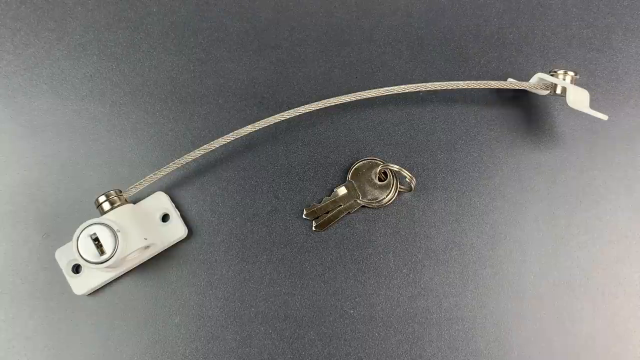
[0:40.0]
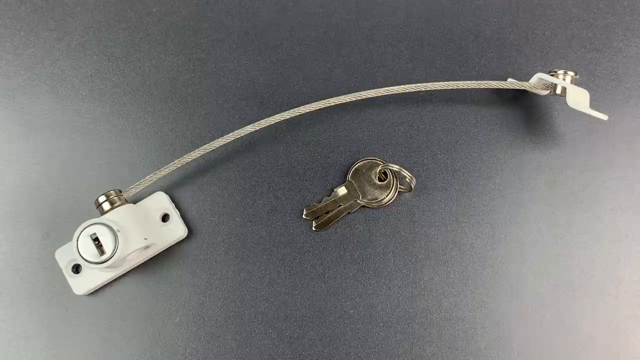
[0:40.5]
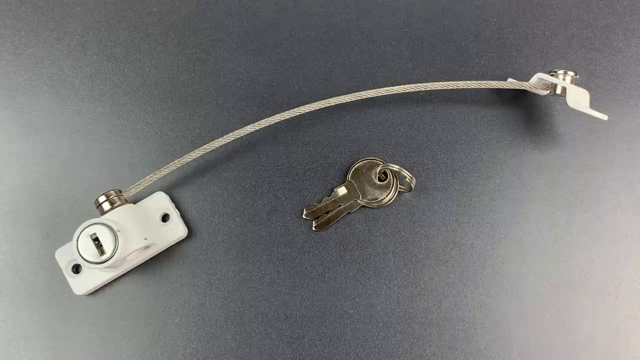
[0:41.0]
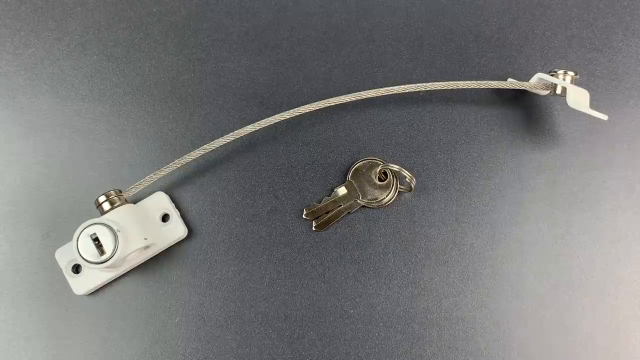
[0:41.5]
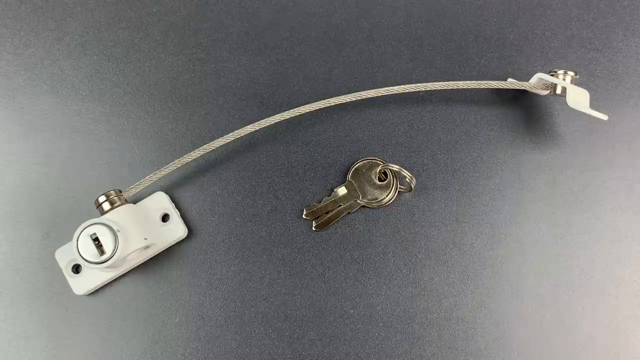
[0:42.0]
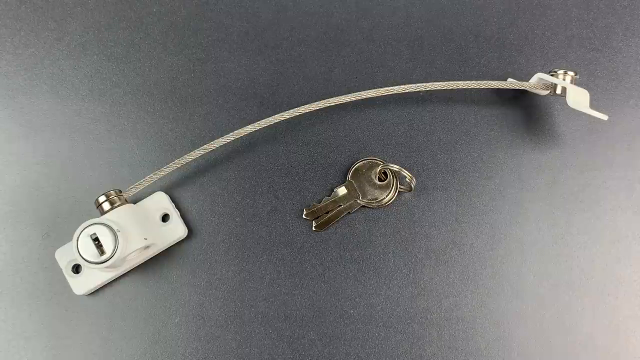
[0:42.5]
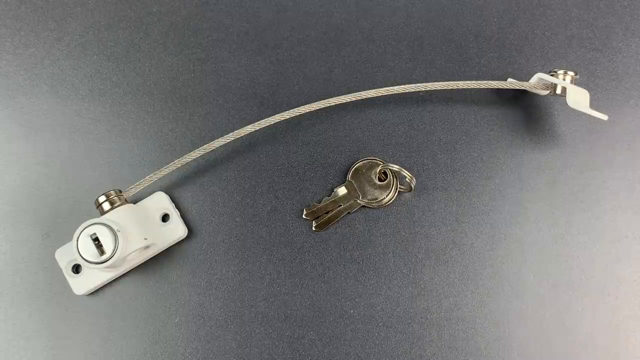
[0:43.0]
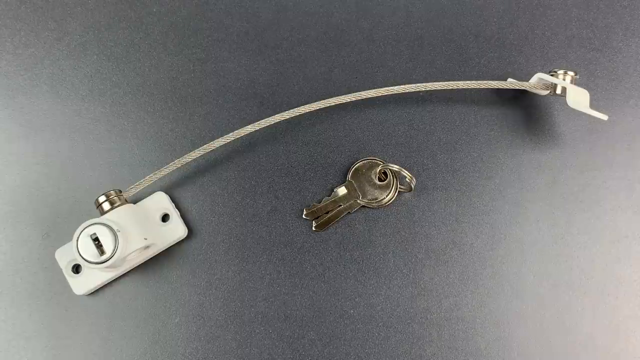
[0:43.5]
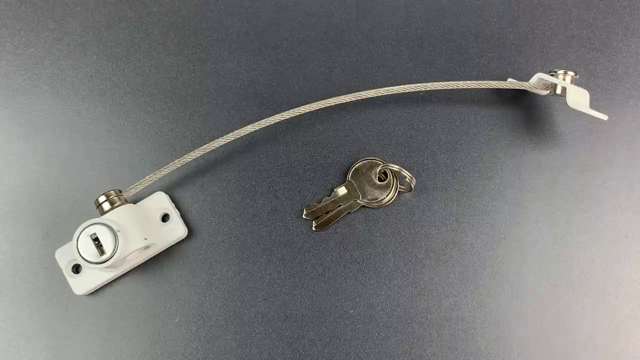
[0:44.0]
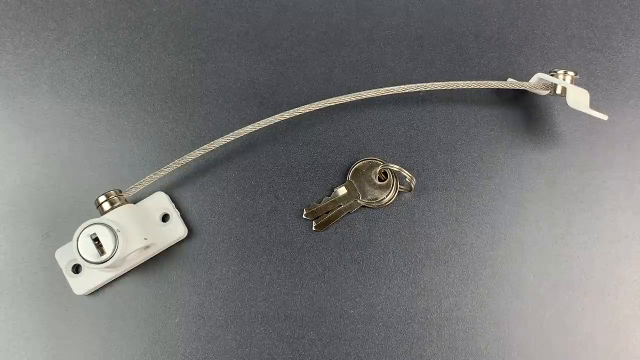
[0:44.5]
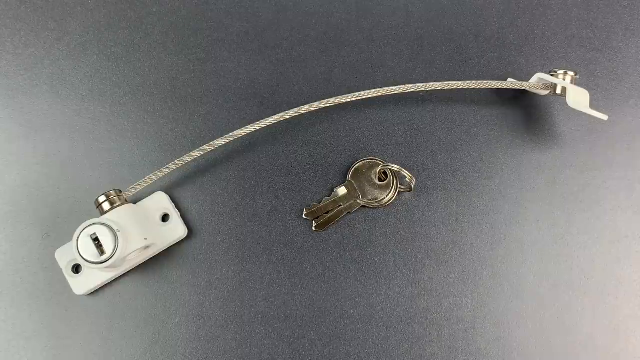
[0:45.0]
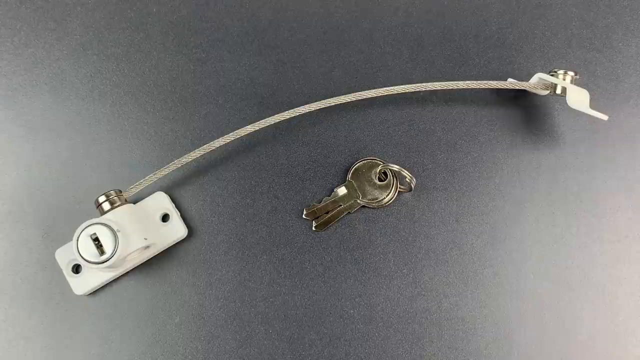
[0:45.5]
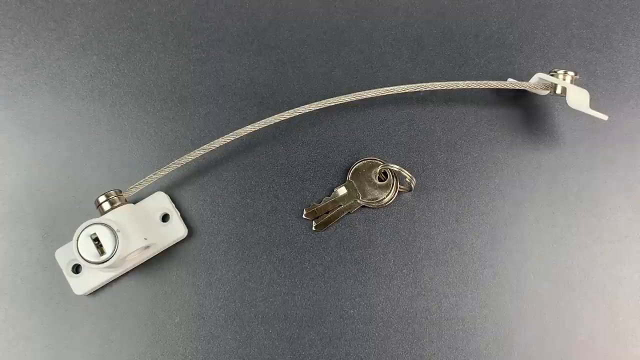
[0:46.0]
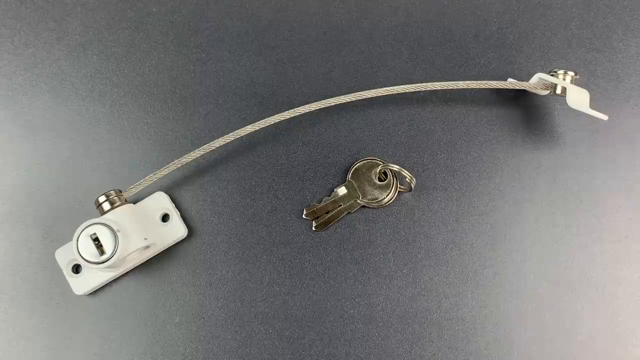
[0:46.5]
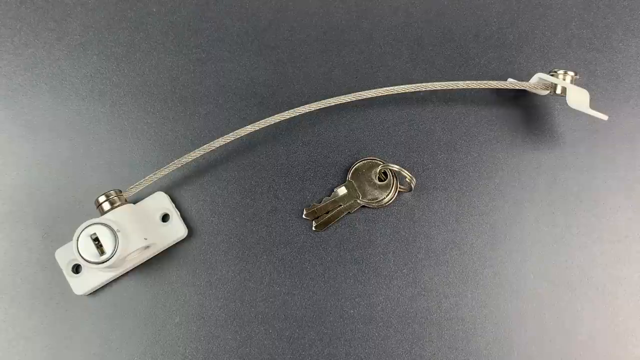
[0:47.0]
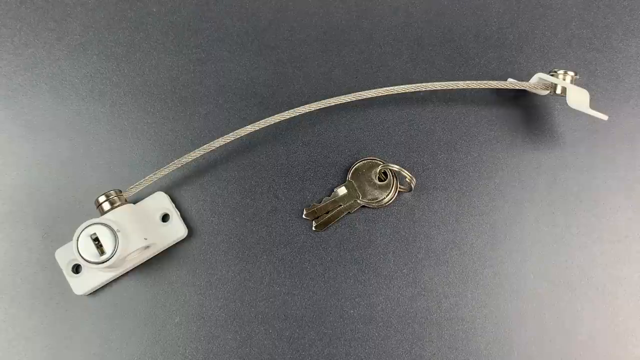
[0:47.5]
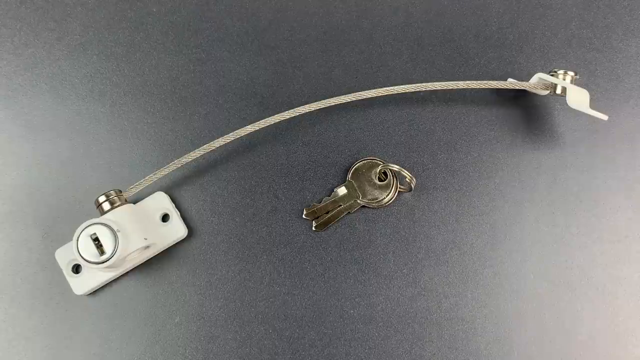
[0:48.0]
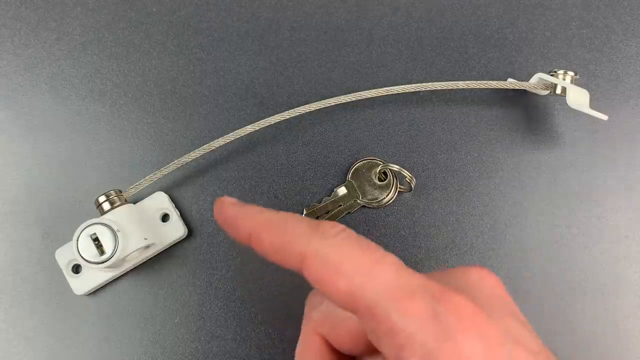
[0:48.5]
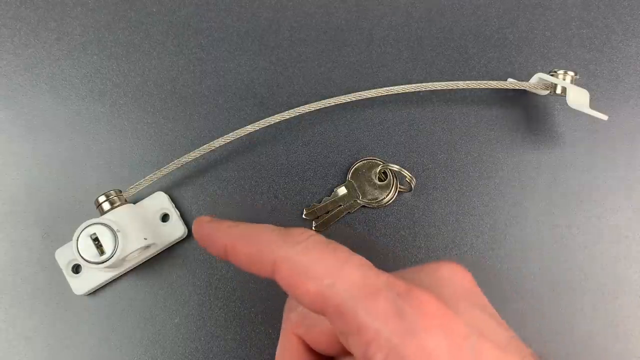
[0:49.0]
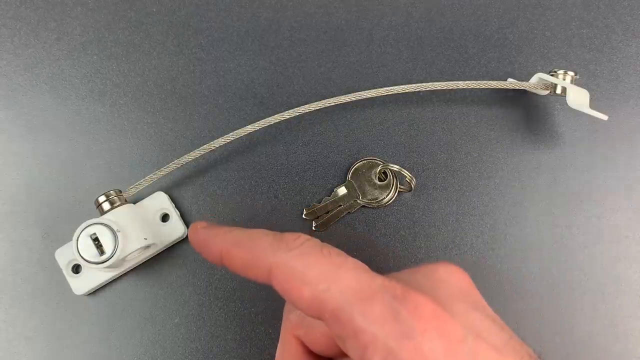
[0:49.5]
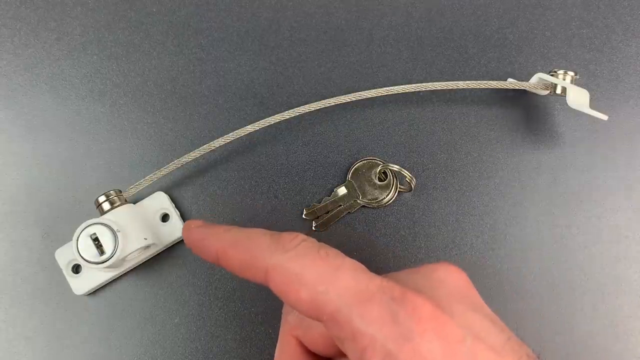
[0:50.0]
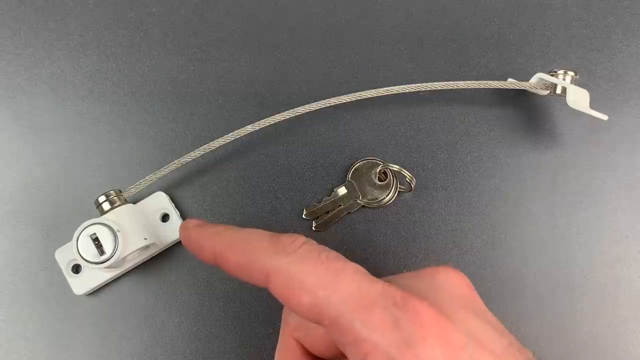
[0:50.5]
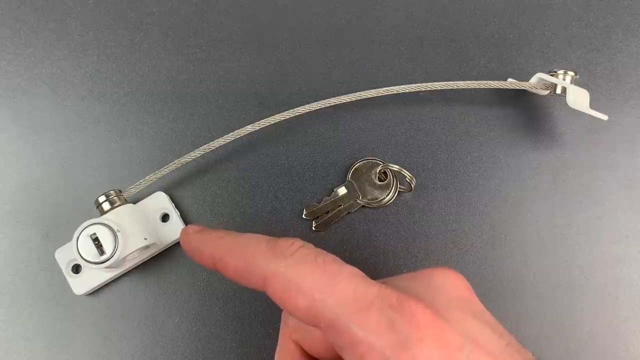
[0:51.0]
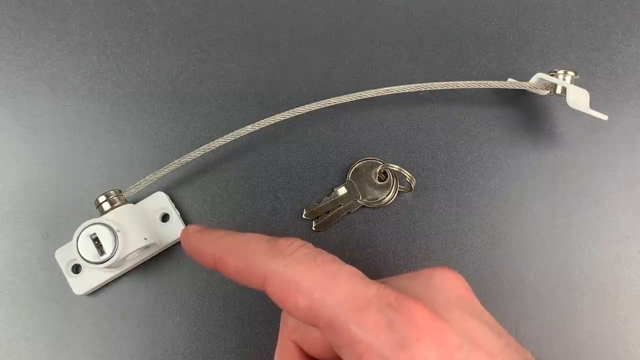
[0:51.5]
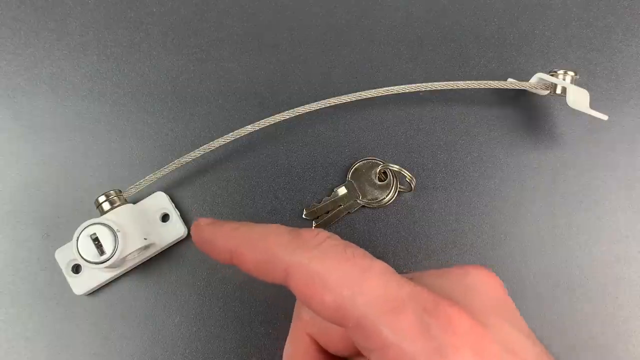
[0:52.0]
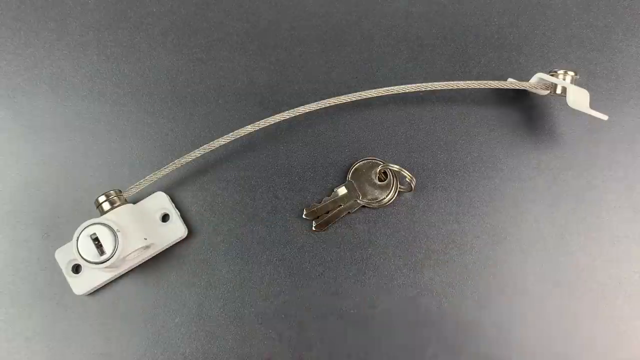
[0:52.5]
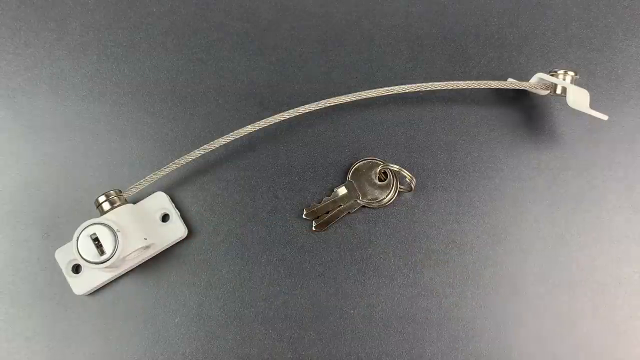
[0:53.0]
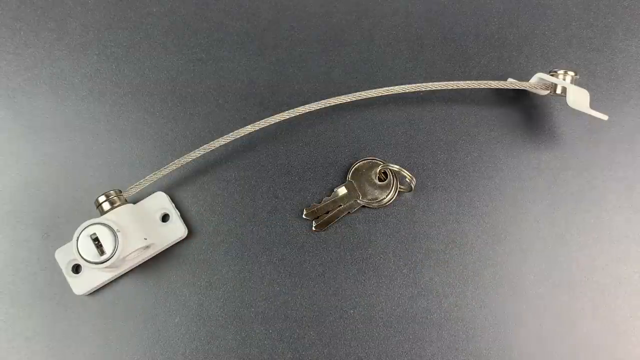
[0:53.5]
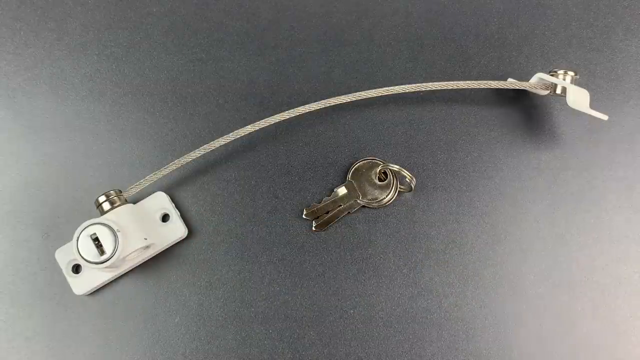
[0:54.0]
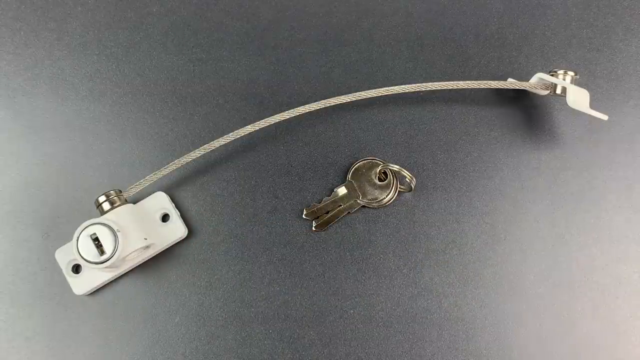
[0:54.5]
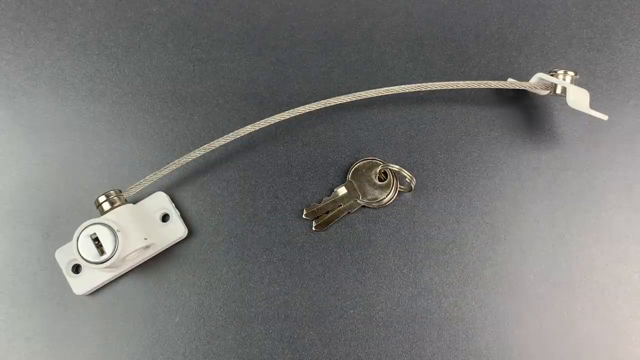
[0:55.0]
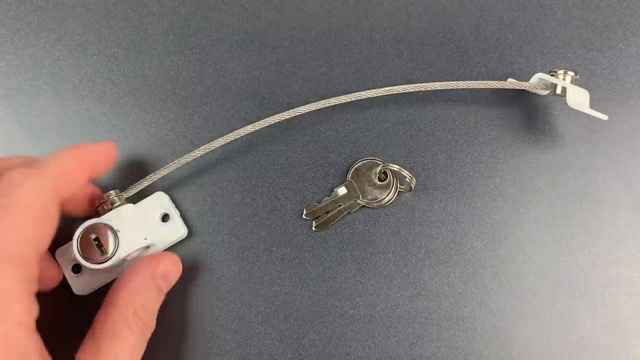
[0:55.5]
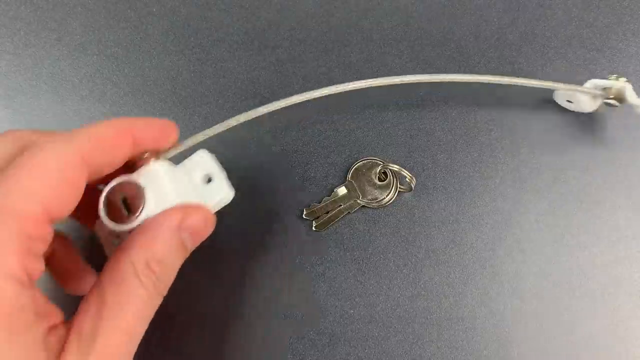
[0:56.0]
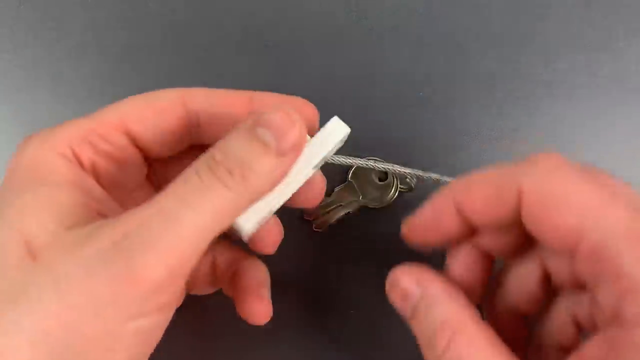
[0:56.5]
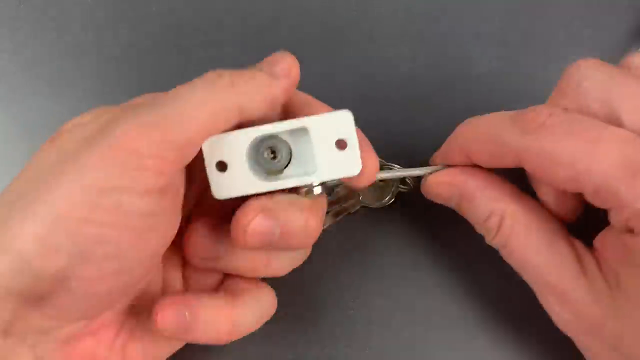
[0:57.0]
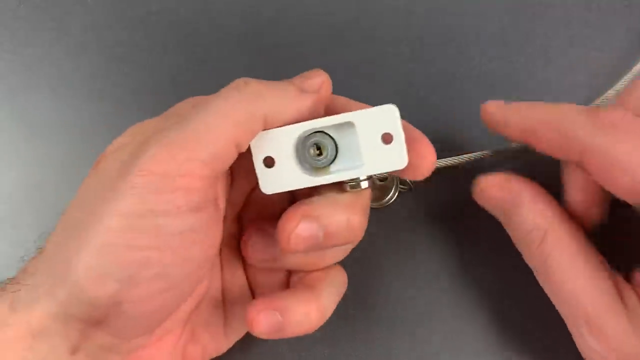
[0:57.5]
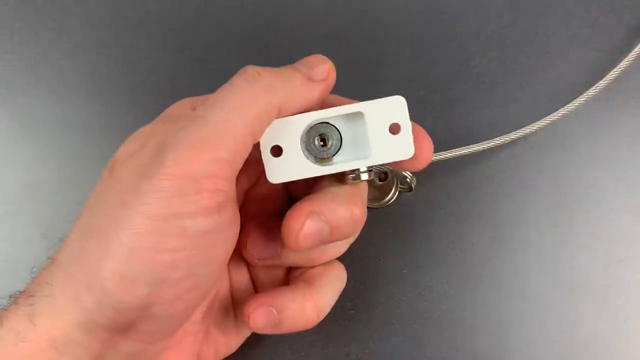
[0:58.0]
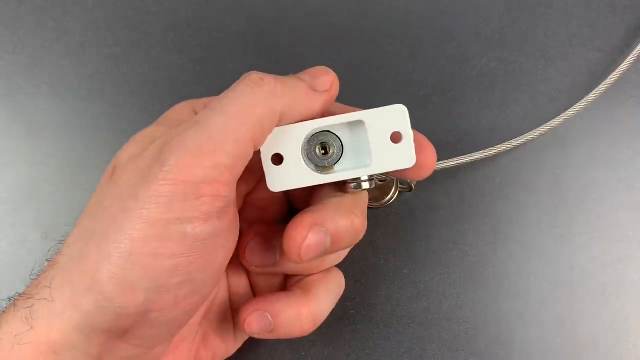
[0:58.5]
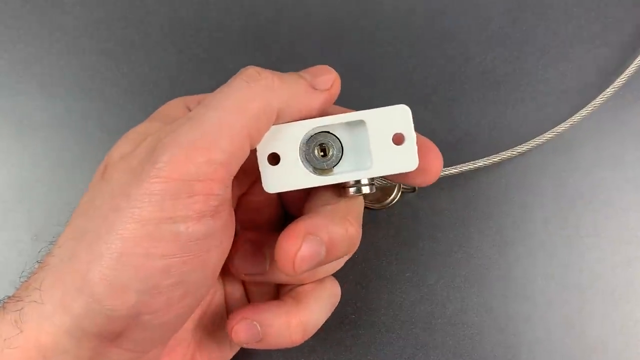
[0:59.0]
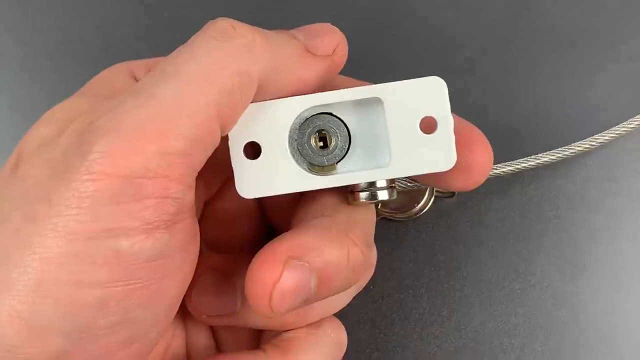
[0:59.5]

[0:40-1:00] Two objects are shown, and a man's finger points to one of them. He picks up the object, apparently a lock, and shows its underside. The lock has holes on either side for screws to attach it to a door, and a long, unidentified item on top that is maybe some sort of addition to the lock. Two silver keys with no coloring and no apparent words are on a silver key ring; they look like they would fit into the lock.